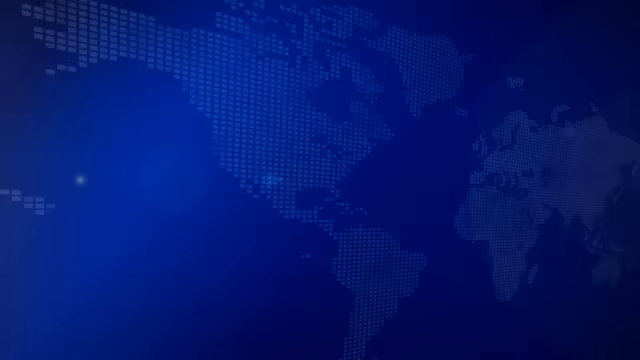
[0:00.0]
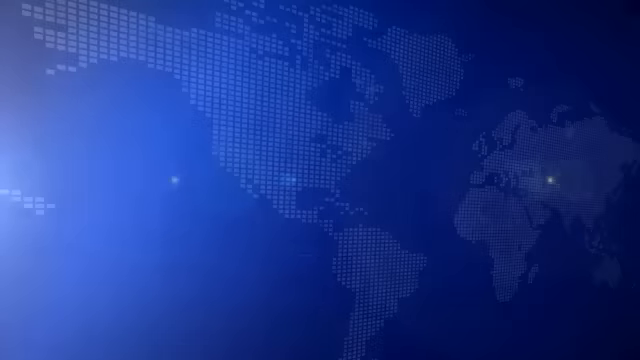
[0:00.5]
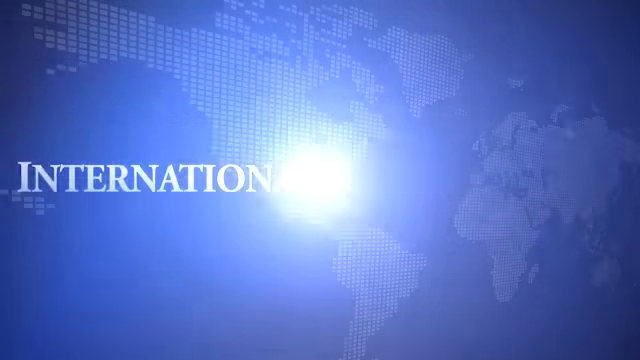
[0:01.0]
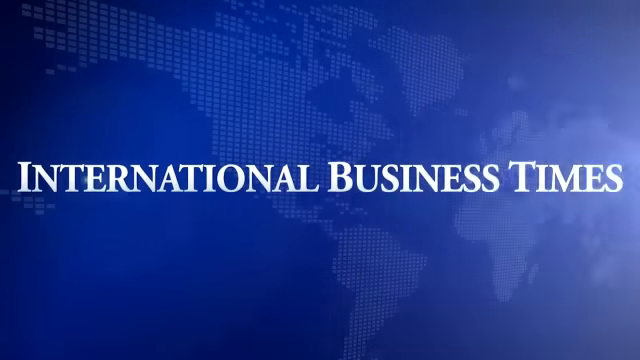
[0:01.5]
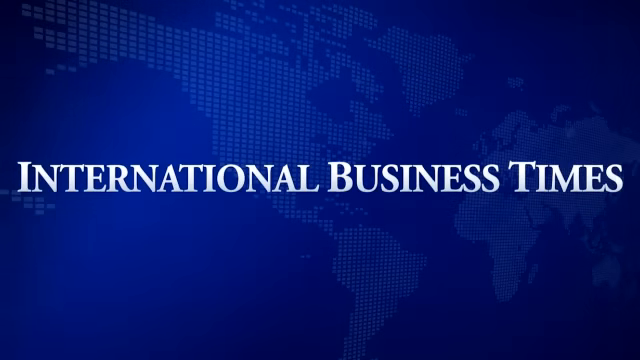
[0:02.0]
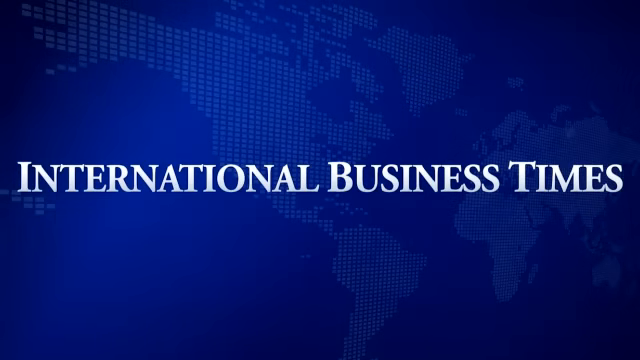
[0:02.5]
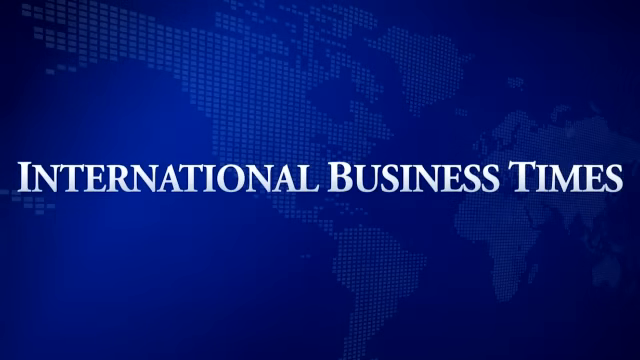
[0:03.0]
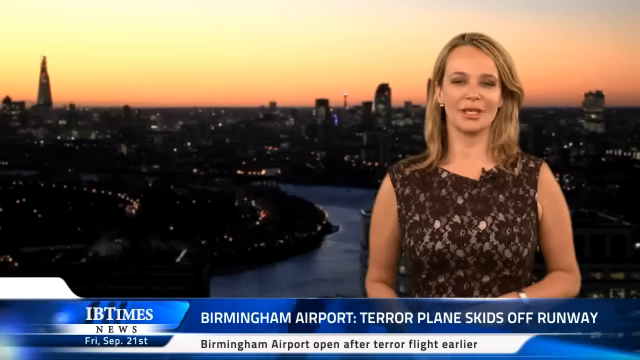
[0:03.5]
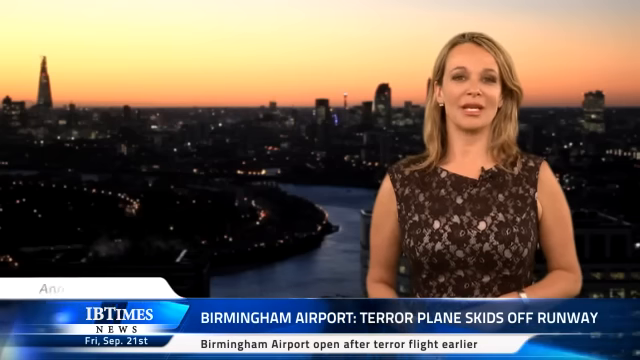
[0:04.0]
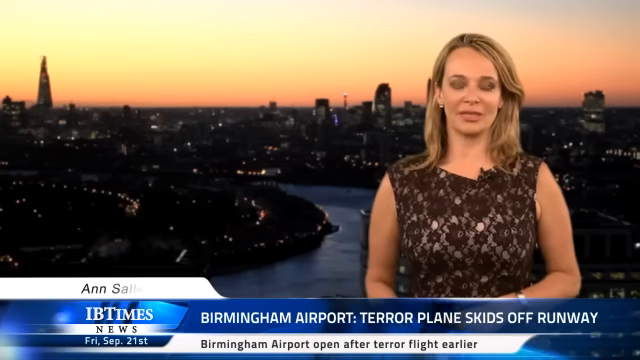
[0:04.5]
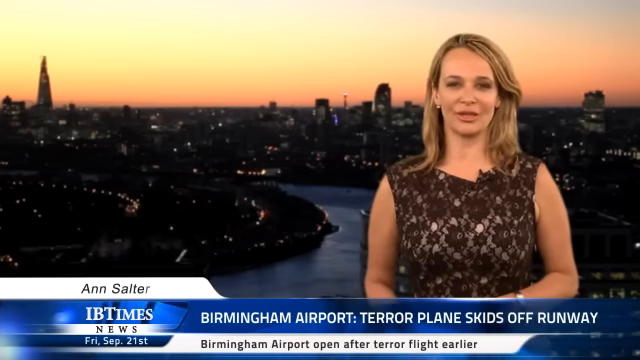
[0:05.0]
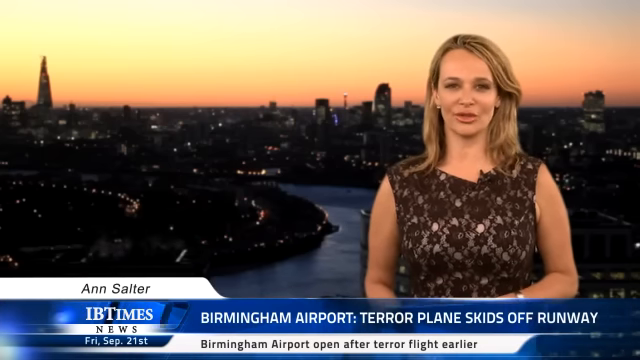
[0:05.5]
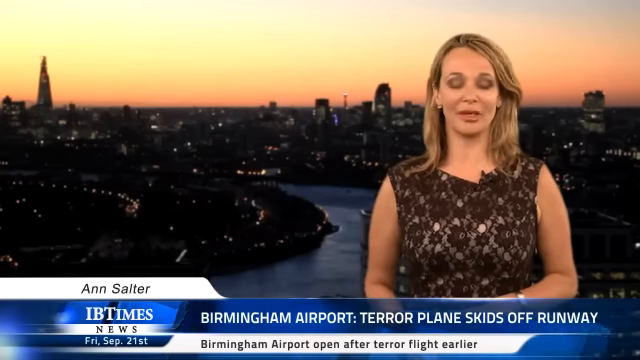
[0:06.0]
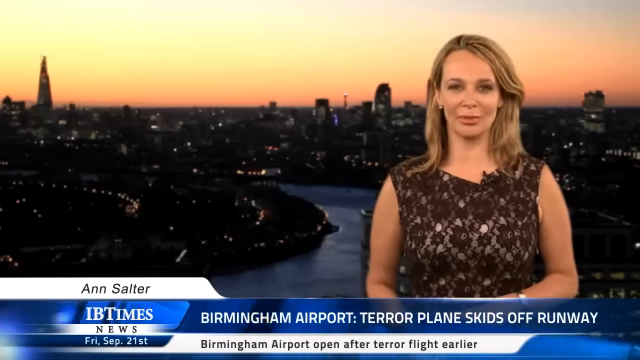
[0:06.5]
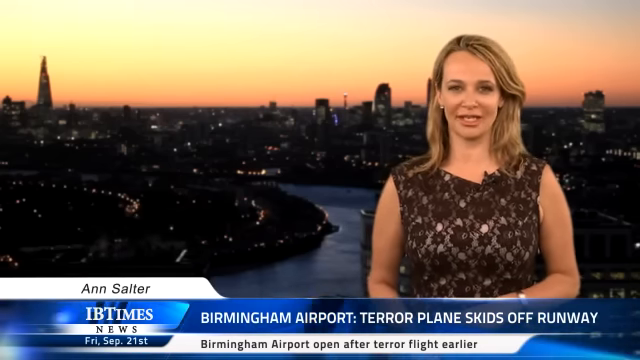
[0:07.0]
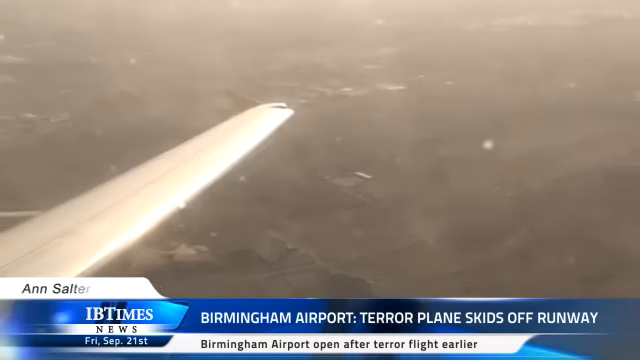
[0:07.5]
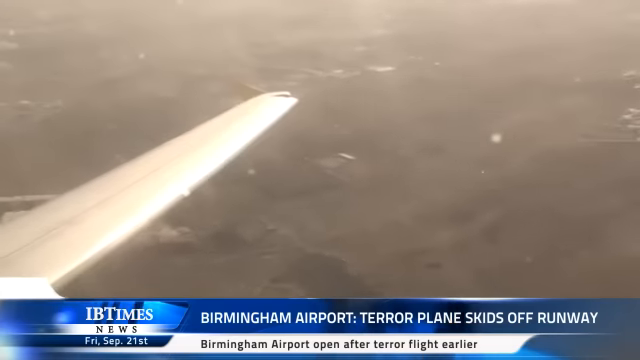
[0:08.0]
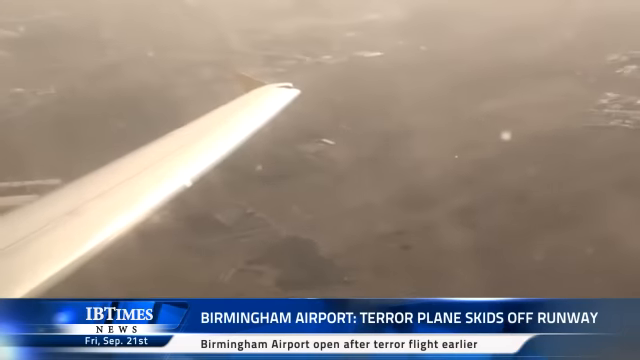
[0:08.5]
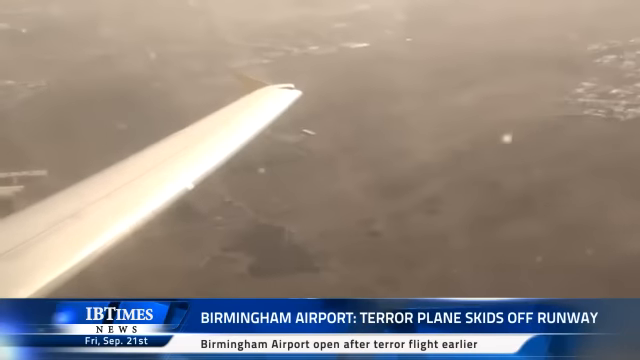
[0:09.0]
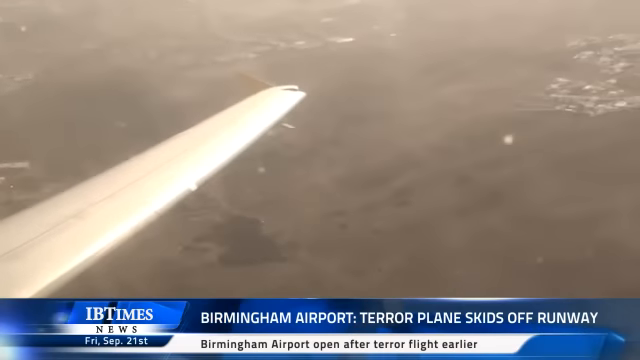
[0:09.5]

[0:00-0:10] The video opens with the text "International Business Times" on a blue background showing a map of the world. A news reporter then appears on screen, talking. In the lower left of the screen the text reads "IB Times News, Friday, September 21st." The banner reads "Birmingham Airport, terror plane skids off runway" and "Birmingham Airport opened after terror flight earlier." London is visible behind the woman as she talks, and then the wing of an airplane is shown as it flies through the sky. The woman wears a brown dress and has blonde hair that goes past her shoulders, and she looks directly at the camera as she talks.